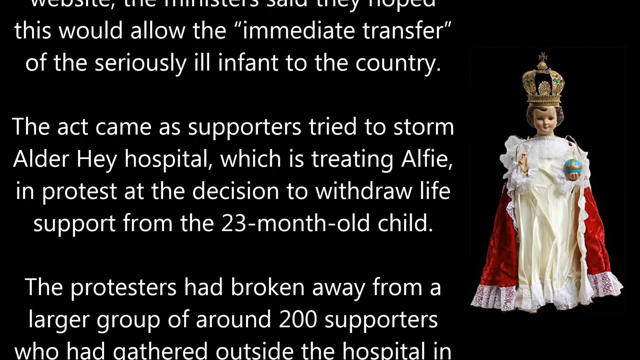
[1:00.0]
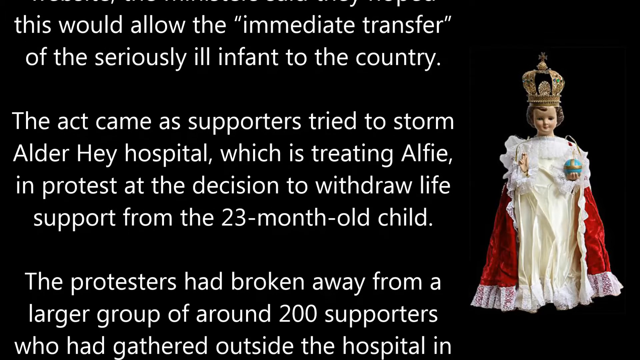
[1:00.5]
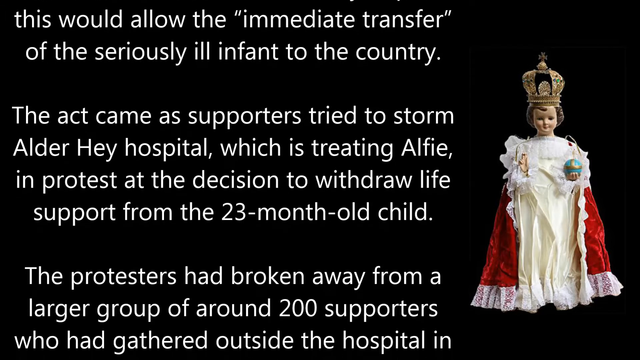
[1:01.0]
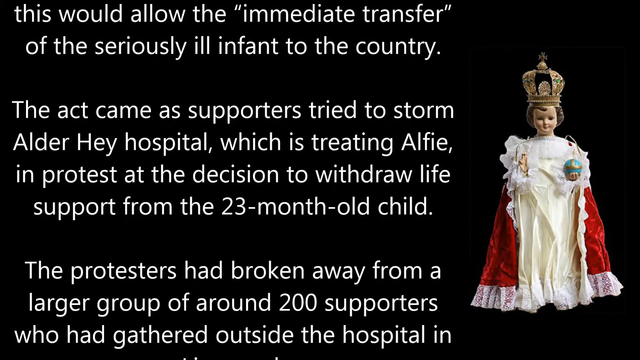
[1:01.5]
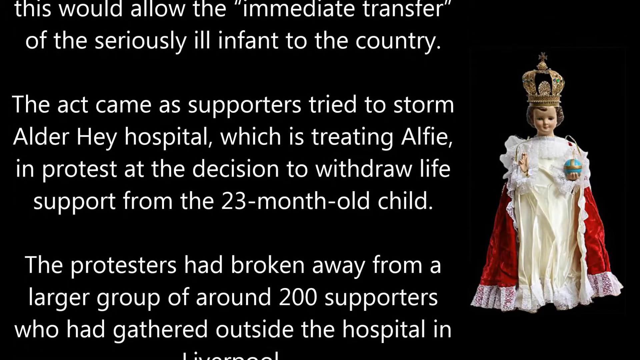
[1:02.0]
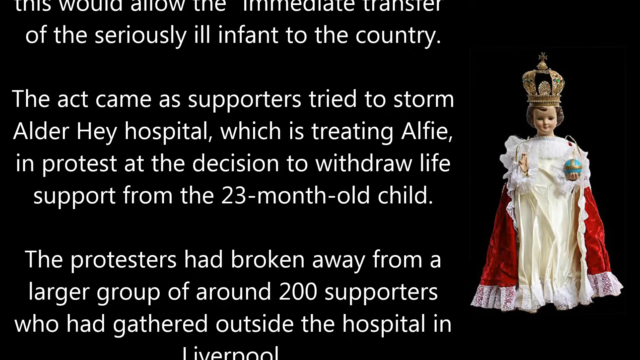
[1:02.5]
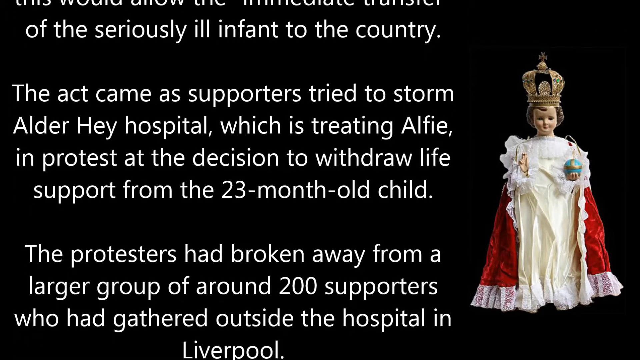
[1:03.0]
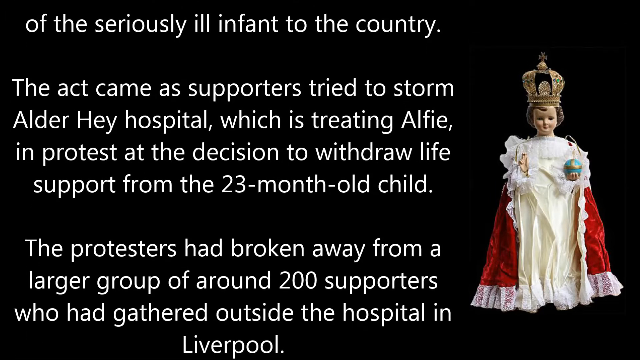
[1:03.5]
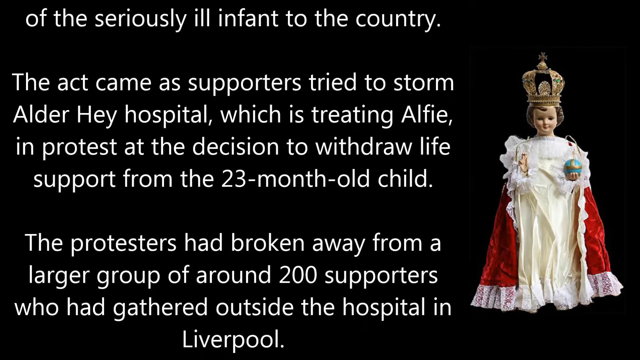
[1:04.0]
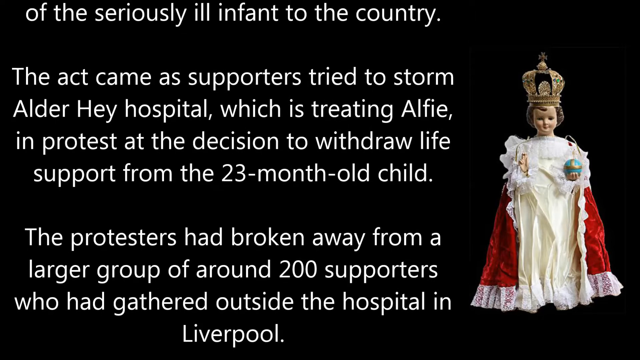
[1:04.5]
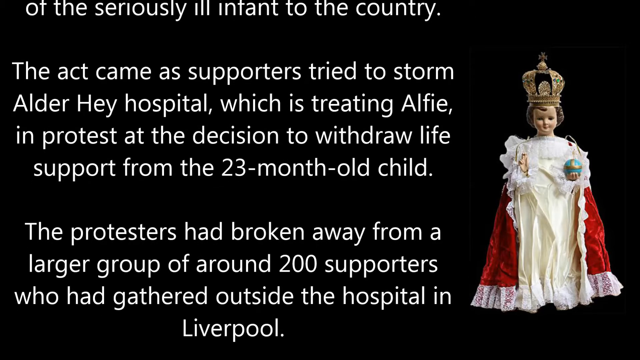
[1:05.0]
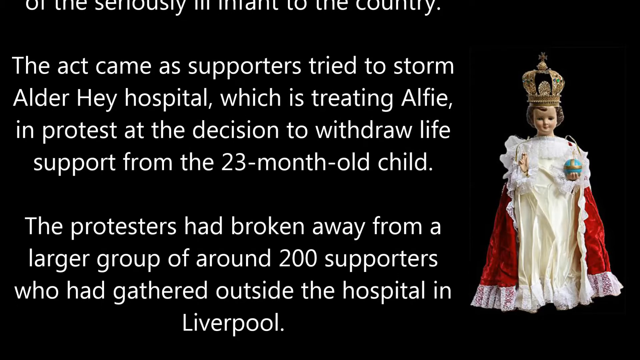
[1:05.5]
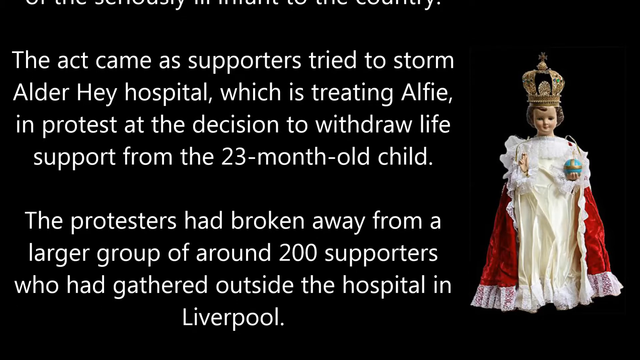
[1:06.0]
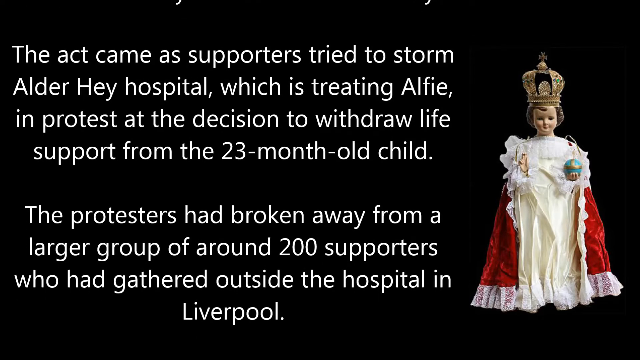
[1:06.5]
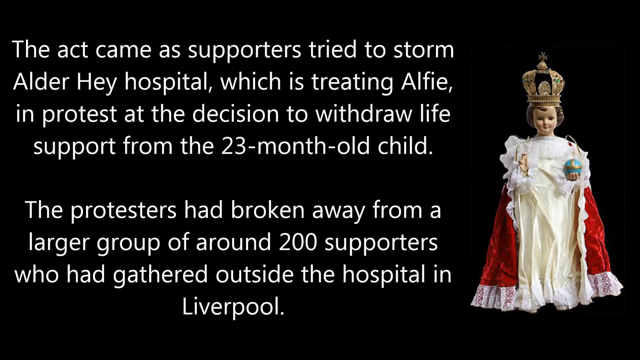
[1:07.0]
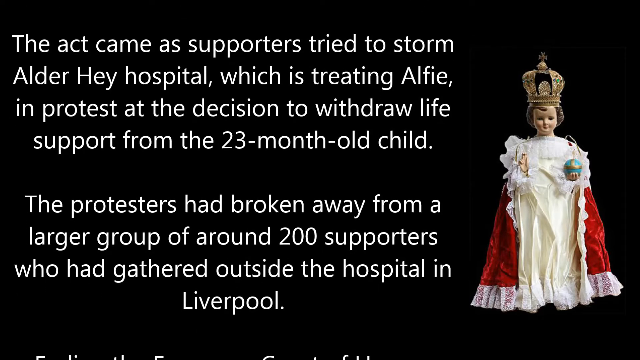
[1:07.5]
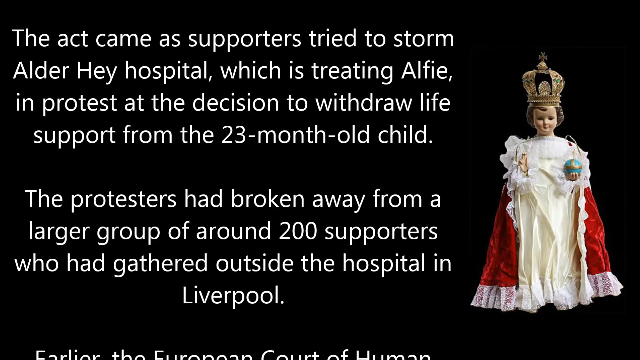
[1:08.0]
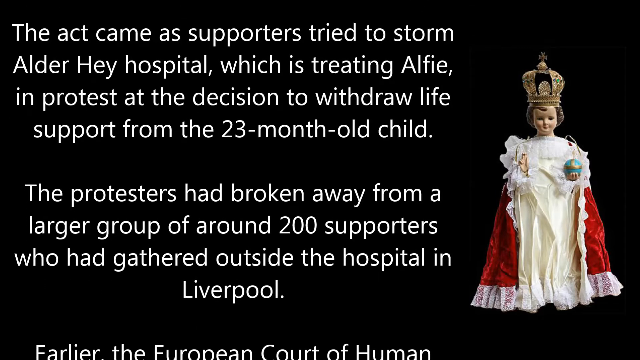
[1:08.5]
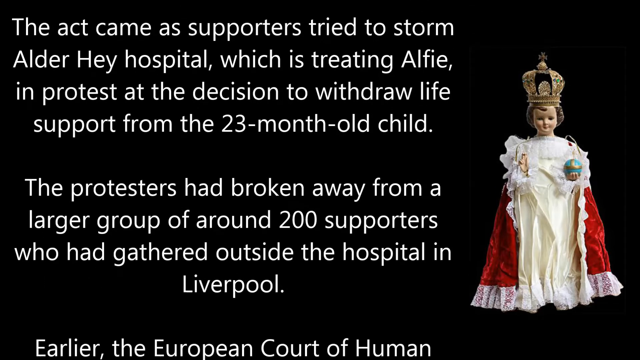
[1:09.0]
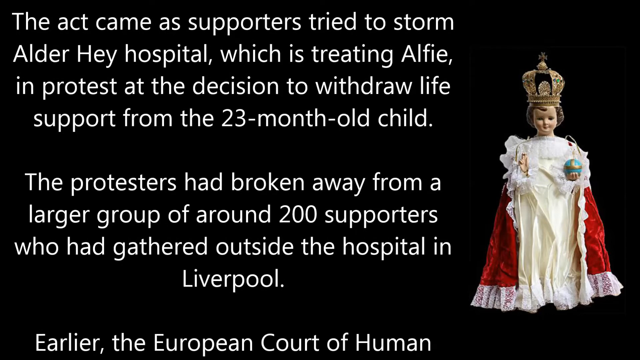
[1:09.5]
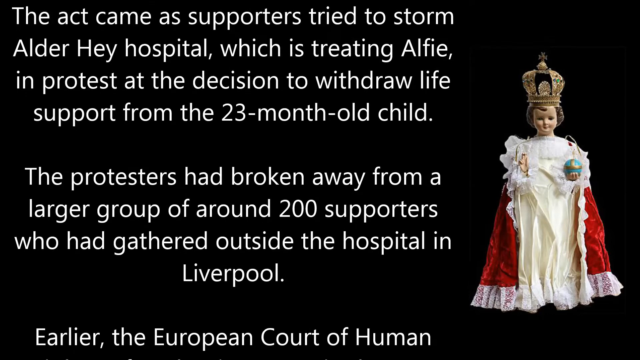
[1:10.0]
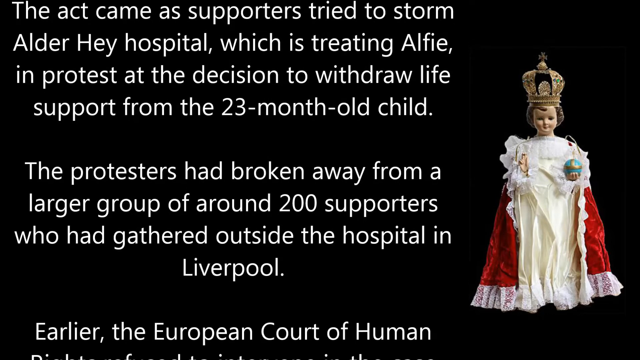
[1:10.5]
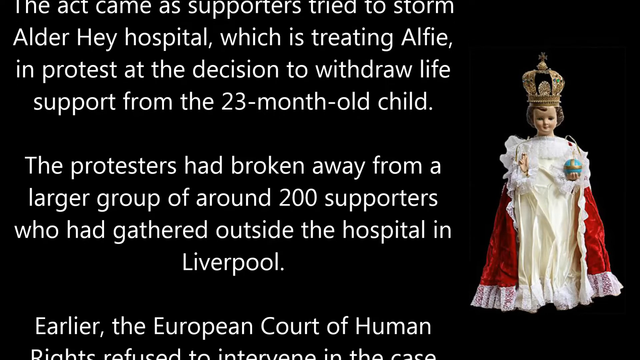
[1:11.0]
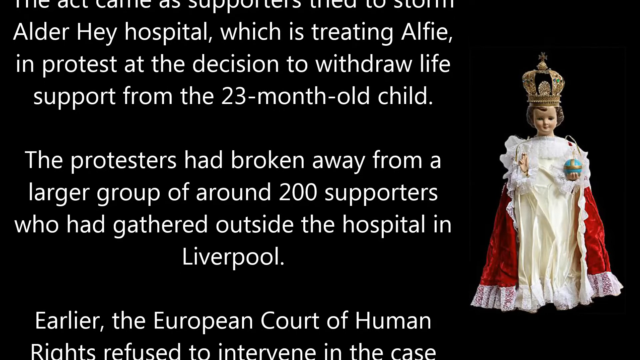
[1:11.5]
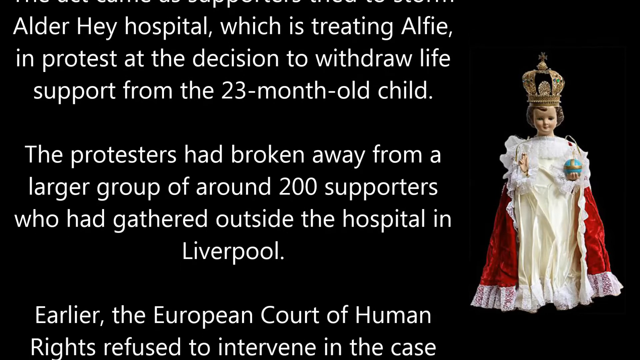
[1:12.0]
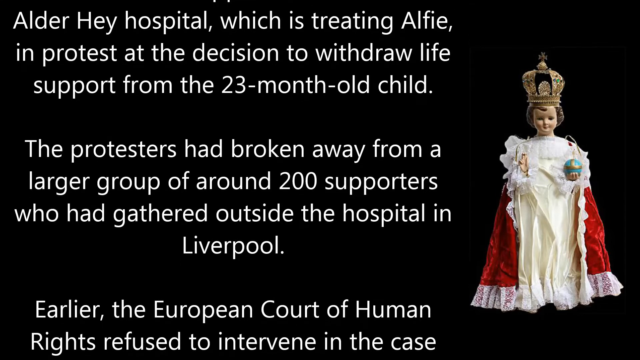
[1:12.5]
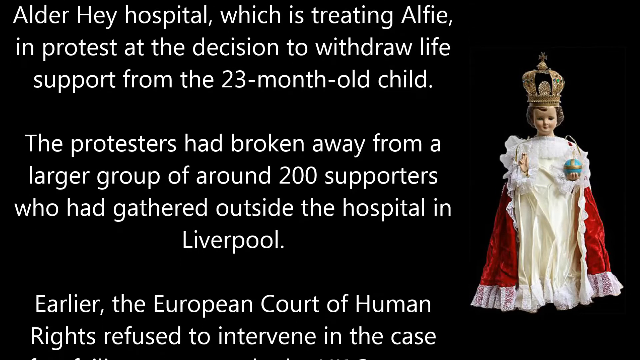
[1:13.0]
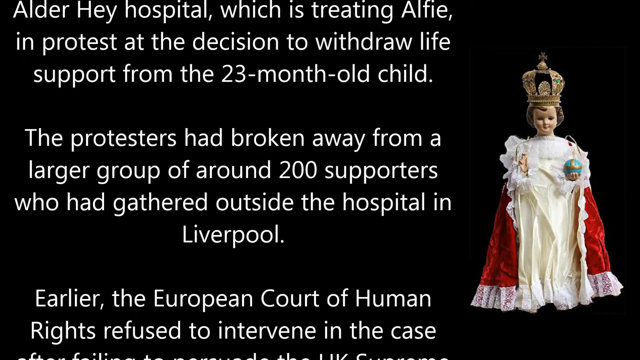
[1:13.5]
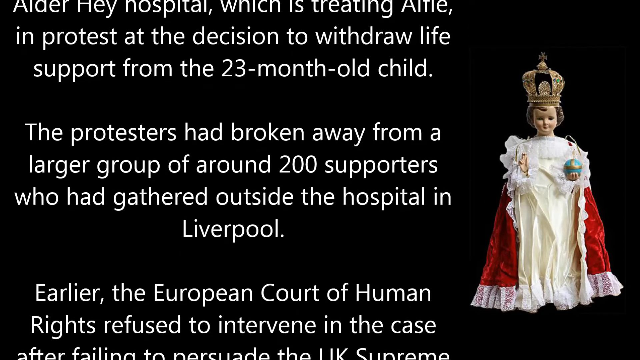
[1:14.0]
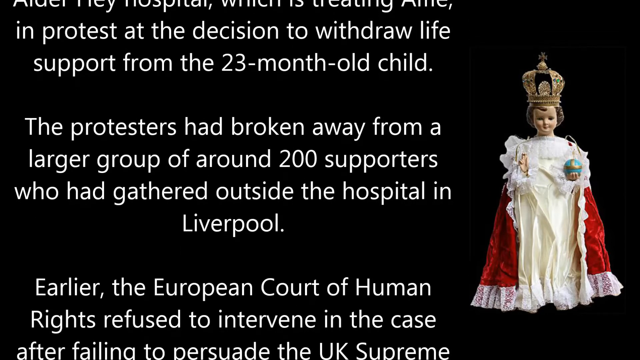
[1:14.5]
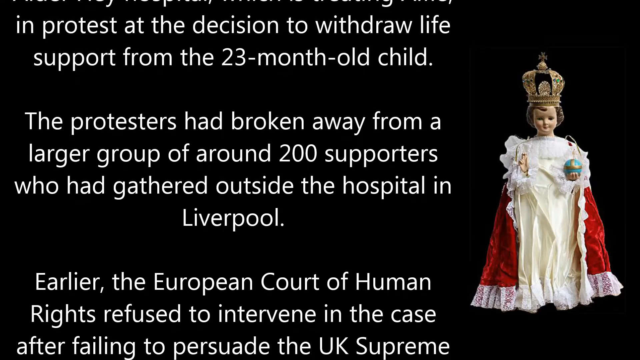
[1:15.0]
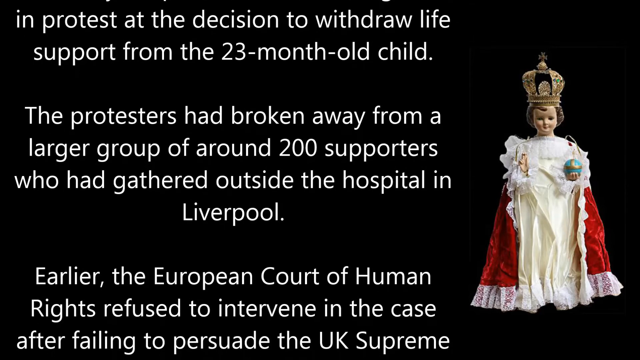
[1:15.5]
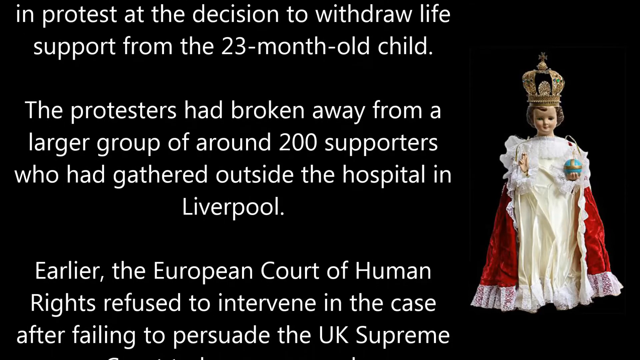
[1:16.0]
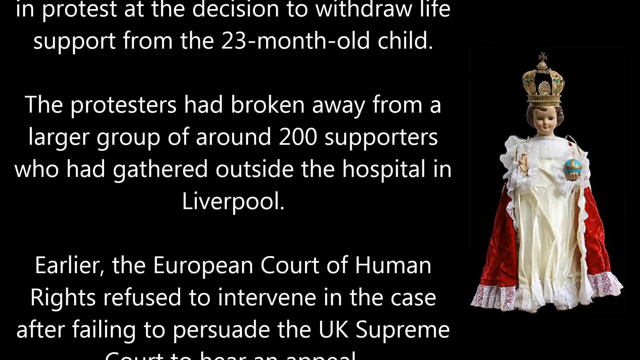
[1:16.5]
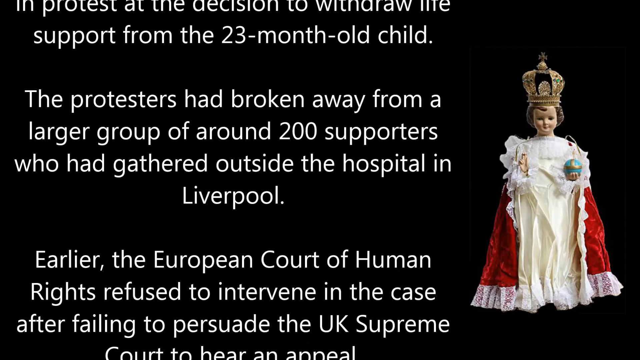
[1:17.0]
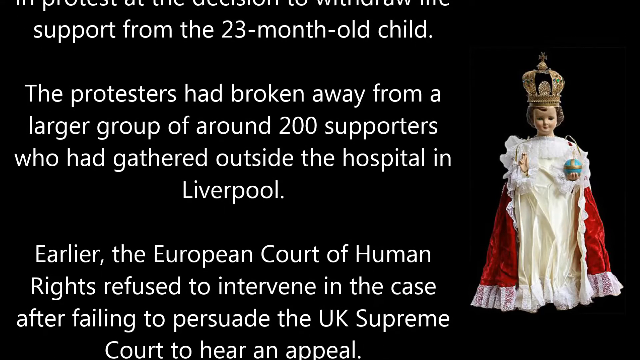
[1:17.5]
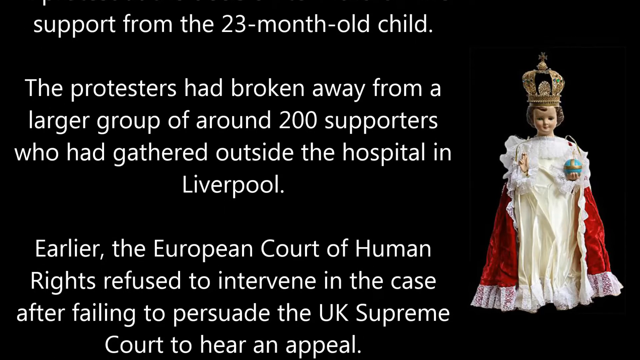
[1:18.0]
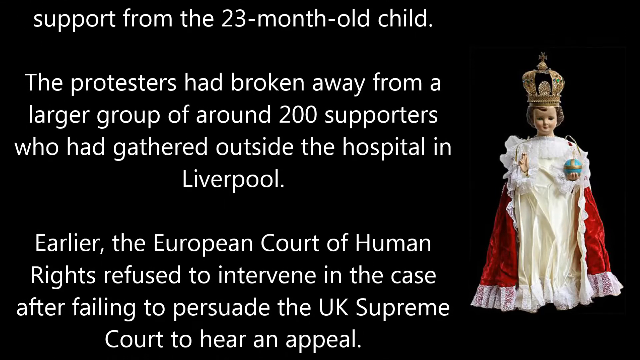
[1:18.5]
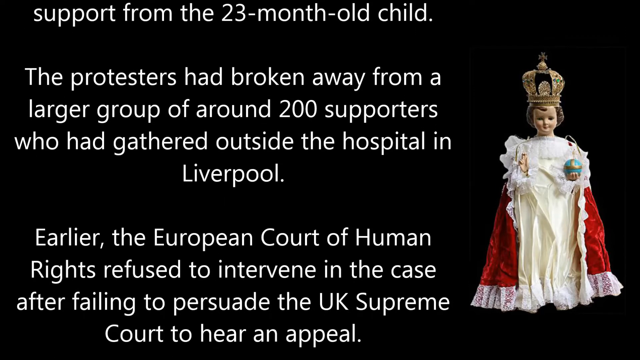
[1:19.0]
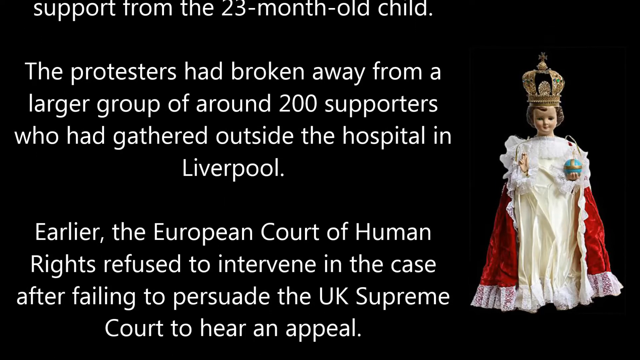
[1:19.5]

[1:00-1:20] White text scrolls upward toward the top of a black screen, with a doll in a king's robe or a queen's dress to the right of the text. As it scrolls, the text reads "The act came as supporters tried to storm Alder Hay Hospital, which is treating Alfie in protest at the decision to withdraw life support from the 23-month-old child." The next paragraph states "The protesters had broken away from a larger group of around 200 supporters who had gathered outside the hospital in Liverpool." The text continues to scroll toward the top of the screen, and the next paragraph begins "Earlier, the European Court of Human Rights refused to intervene in the case after failing to persuade the UK Supreme Court to hear an appeal."